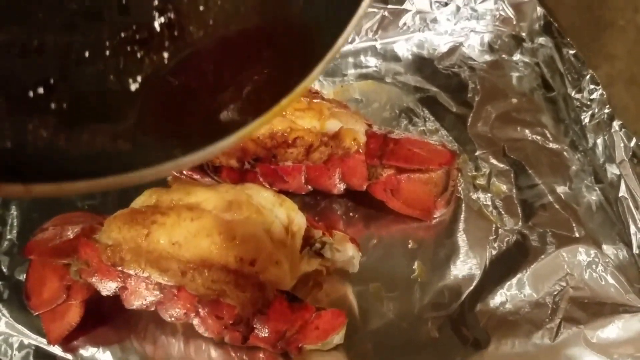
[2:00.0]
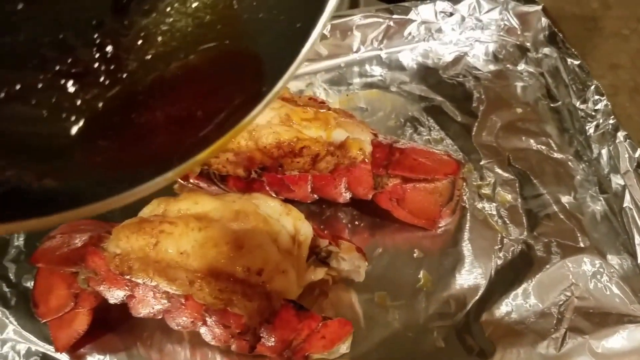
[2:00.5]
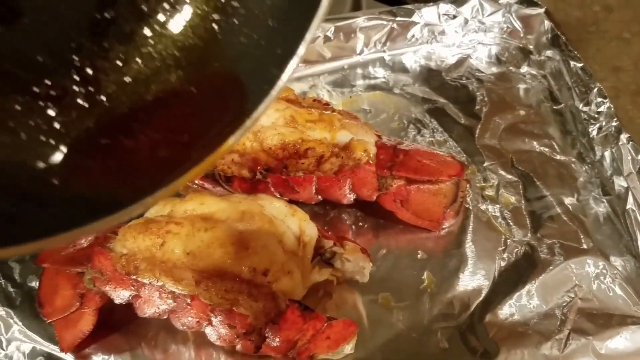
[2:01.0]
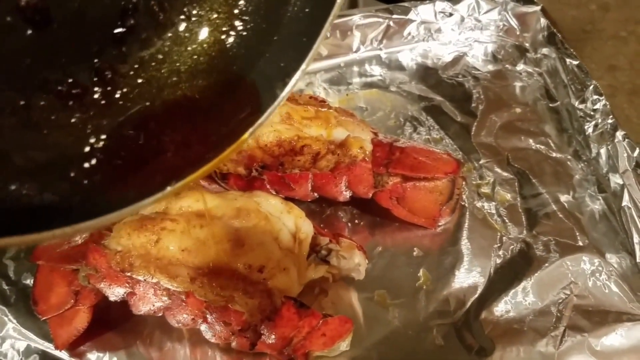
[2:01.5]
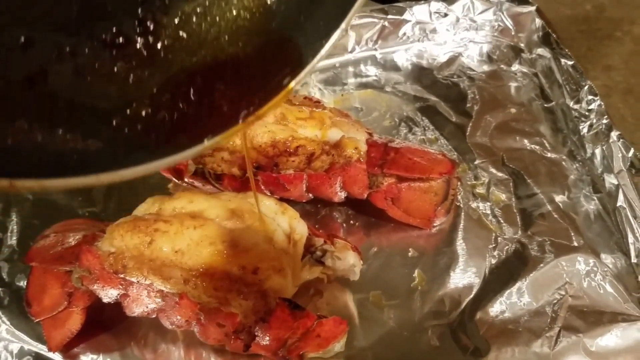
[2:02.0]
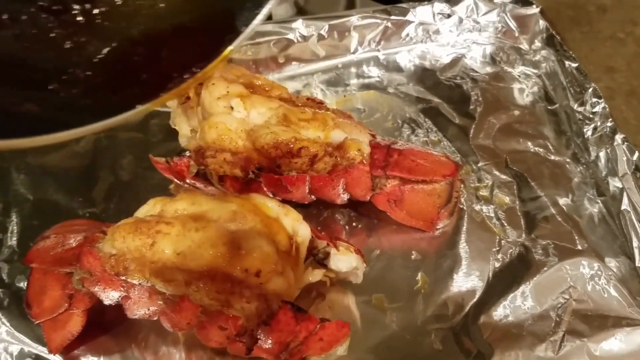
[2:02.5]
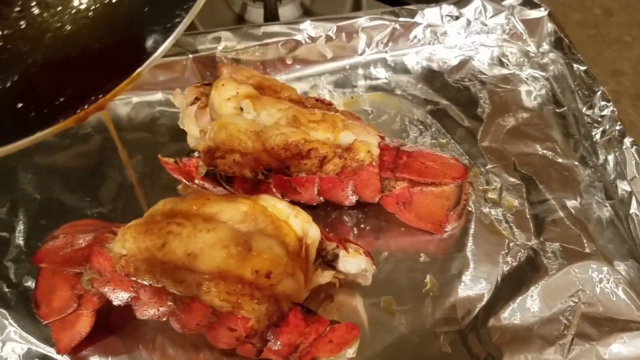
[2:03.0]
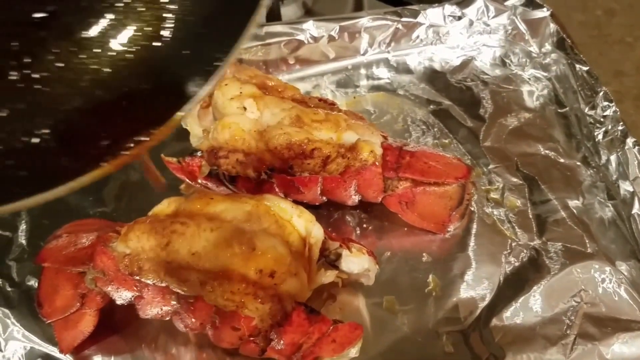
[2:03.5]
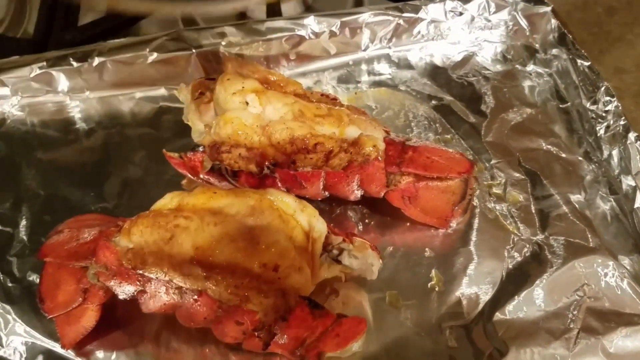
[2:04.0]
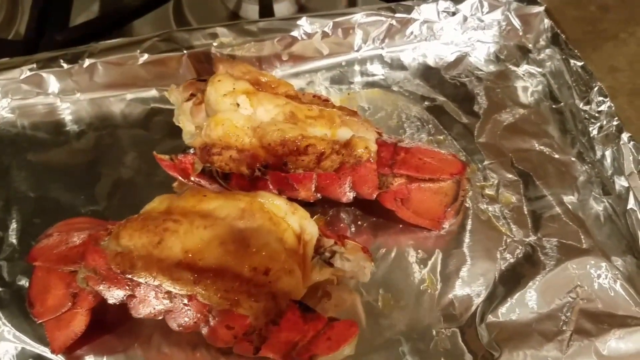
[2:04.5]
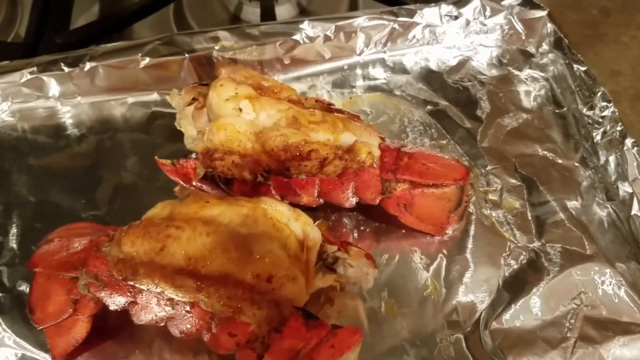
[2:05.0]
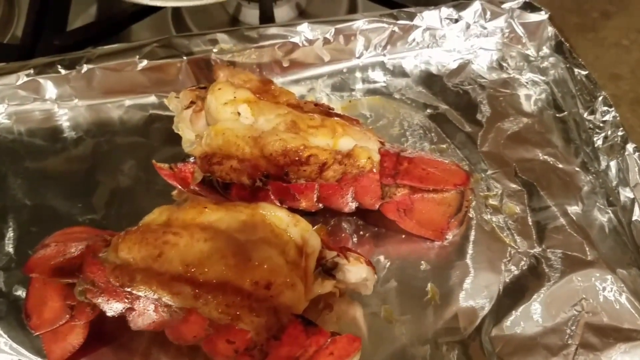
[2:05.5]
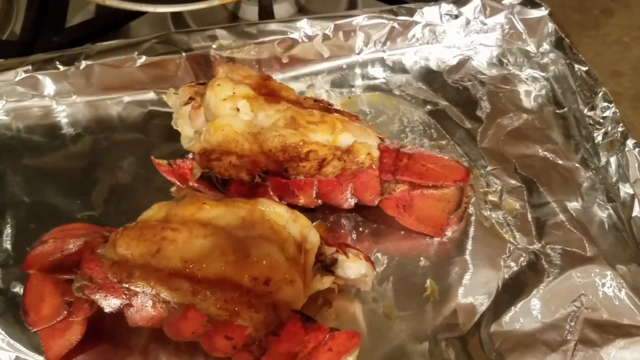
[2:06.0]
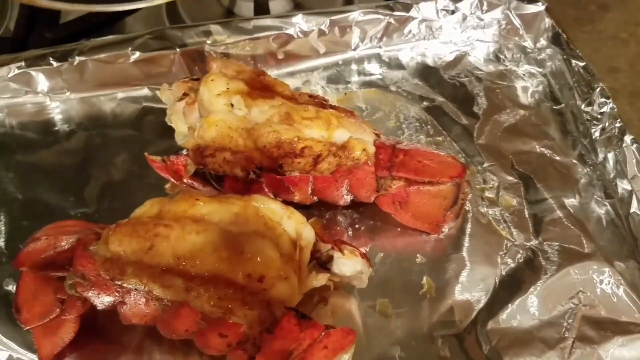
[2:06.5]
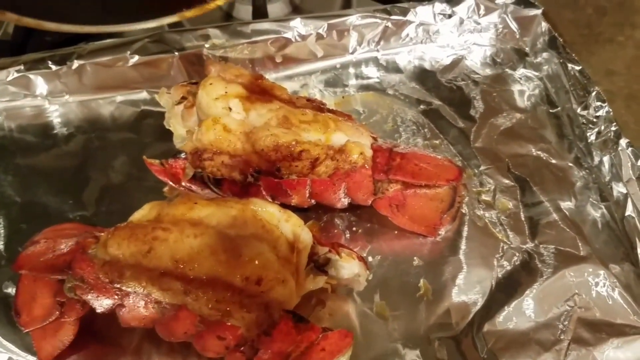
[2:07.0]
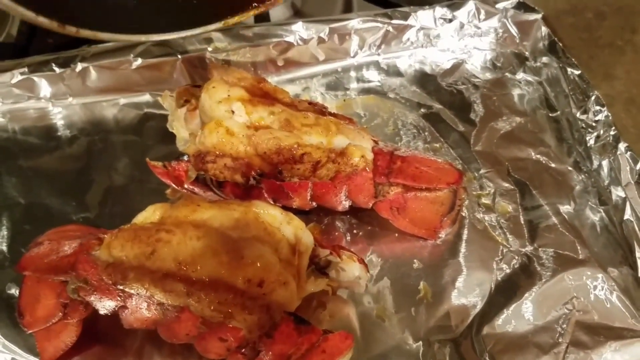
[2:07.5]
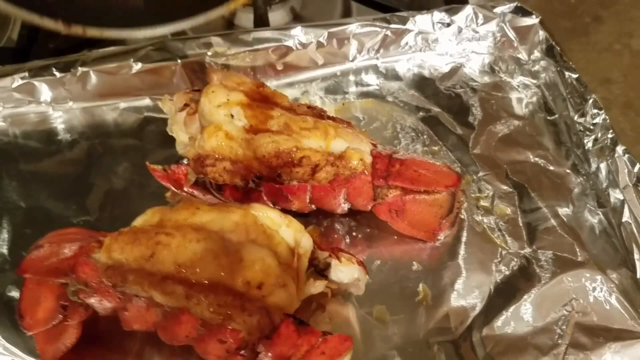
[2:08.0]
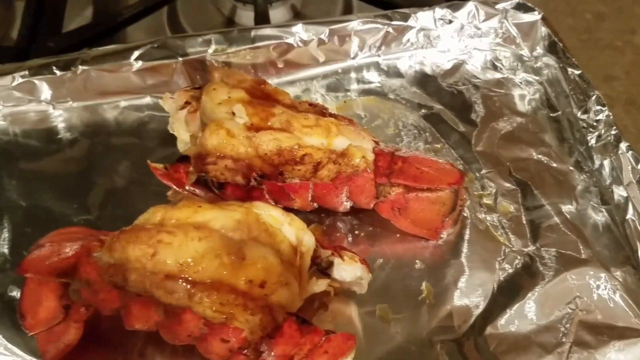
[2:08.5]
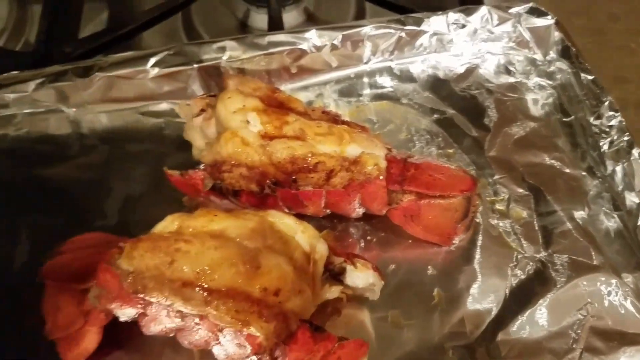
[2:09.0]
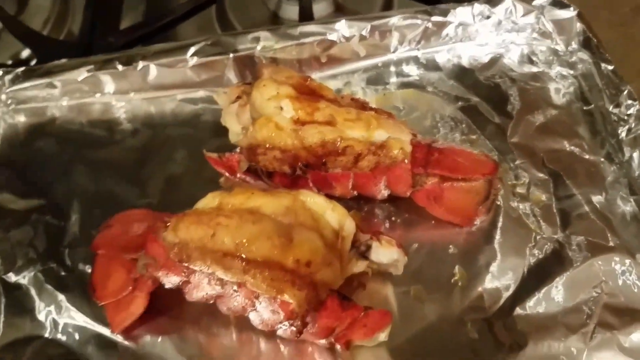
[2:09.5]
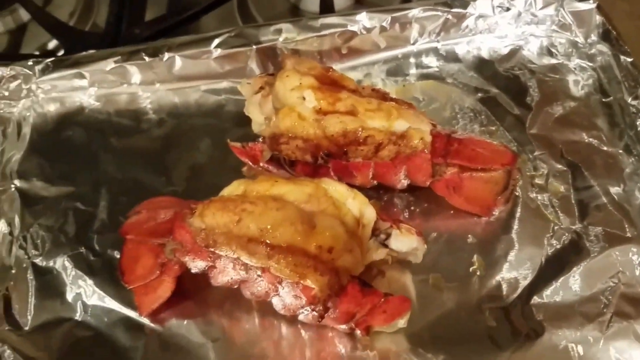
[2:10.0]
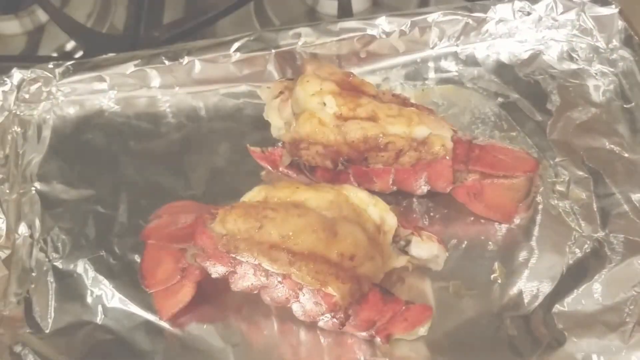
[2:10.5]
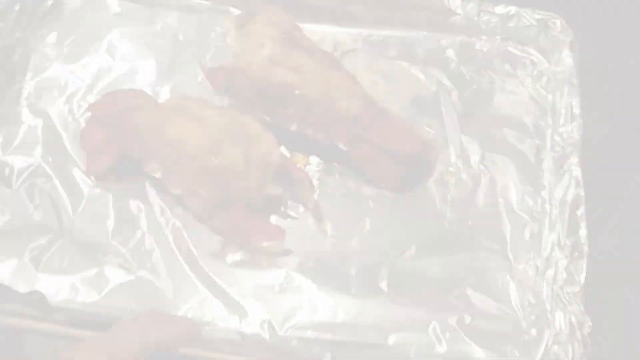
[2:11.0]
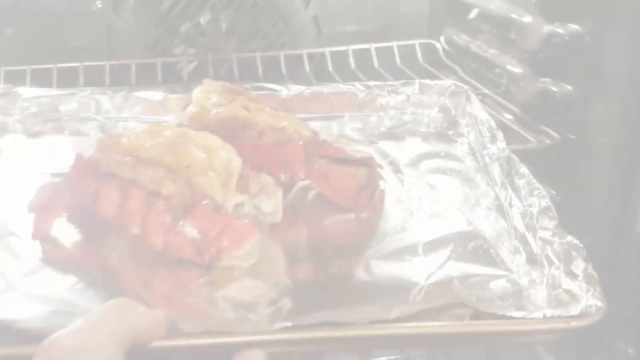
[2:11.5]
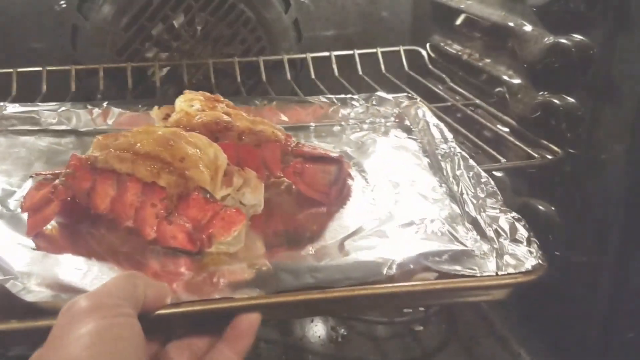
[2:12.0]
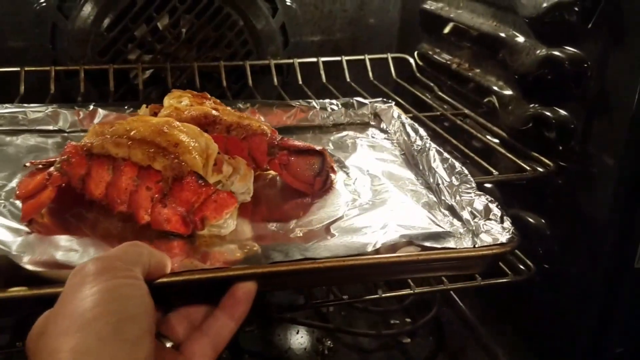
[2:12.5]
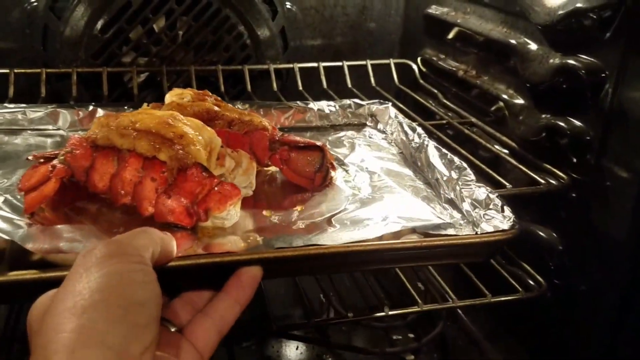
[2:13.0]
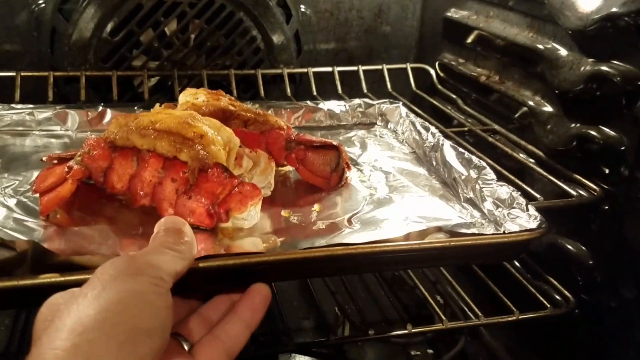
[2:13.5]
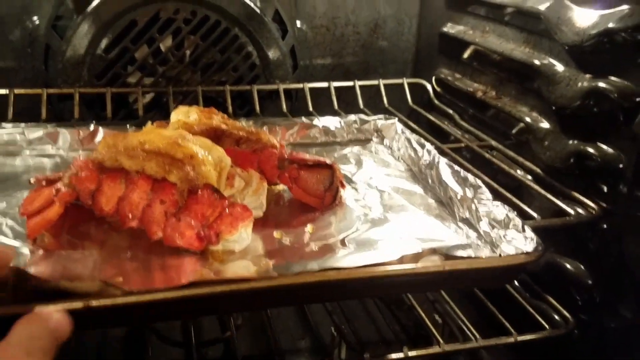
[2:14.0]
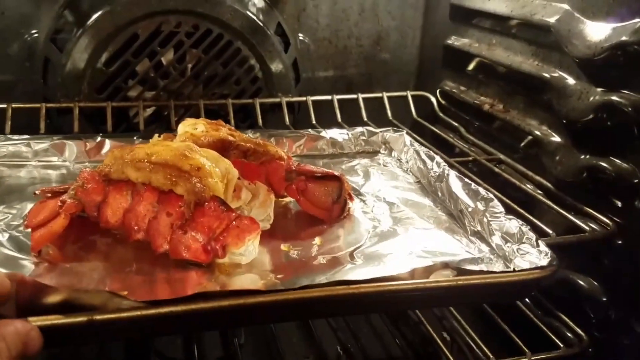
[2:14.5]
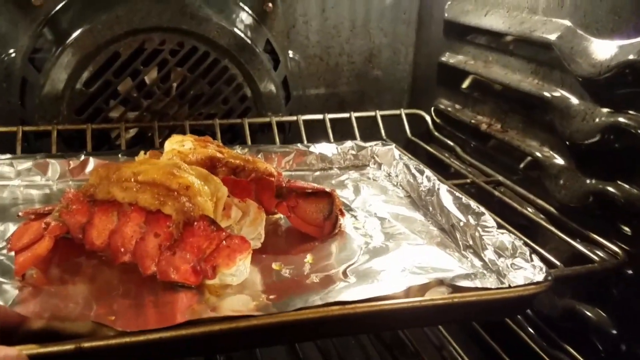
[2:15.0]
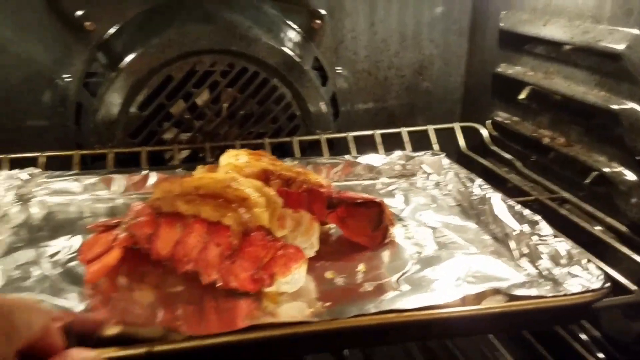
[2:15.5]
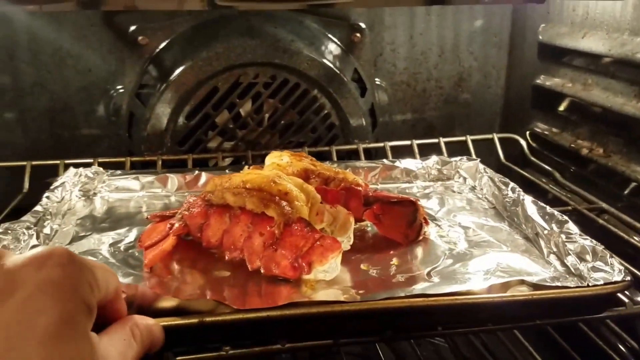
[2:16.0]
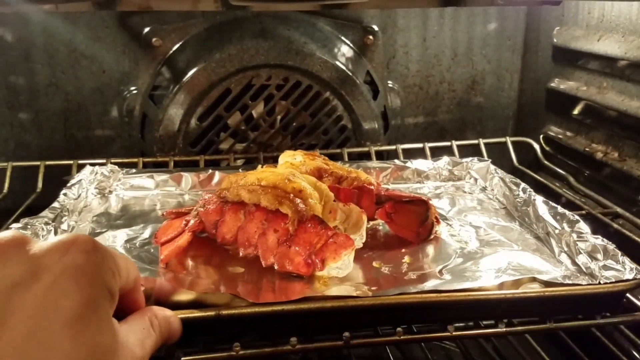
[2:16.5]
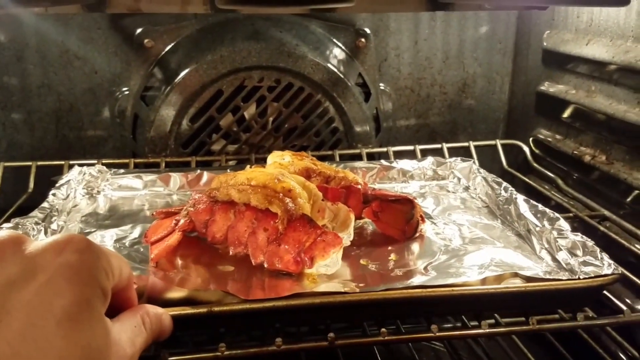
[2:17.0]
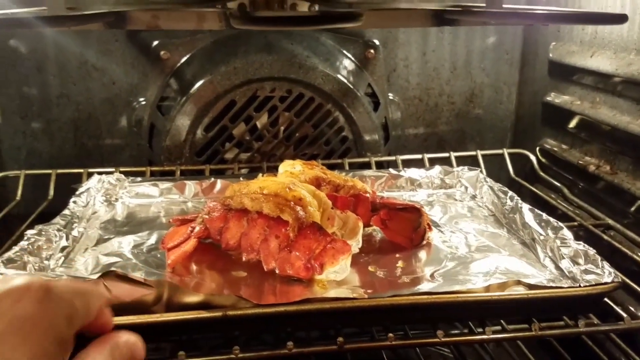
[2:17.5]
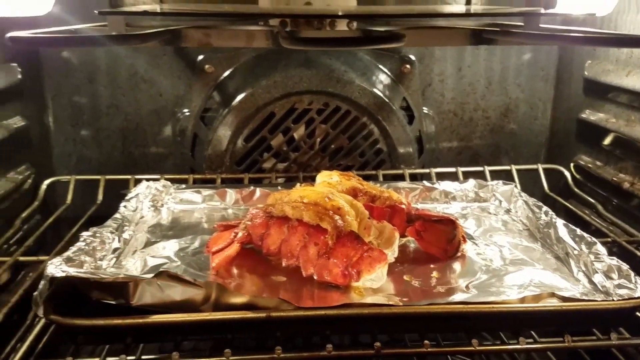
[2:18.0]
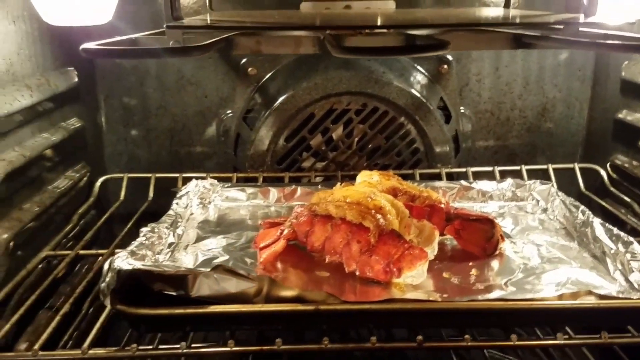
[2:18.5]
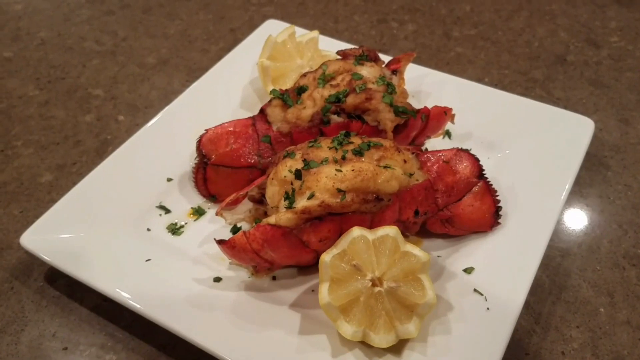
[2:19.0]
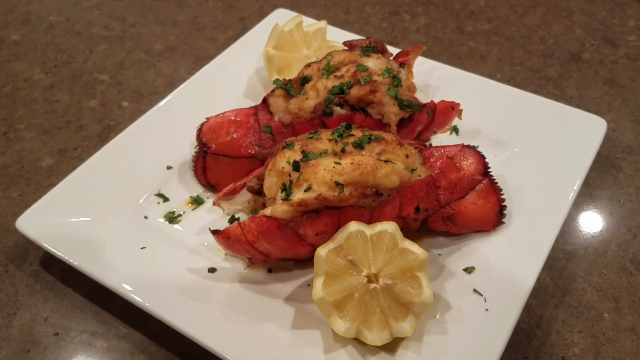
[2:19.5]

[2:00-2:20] From a high angle looking down, a silver foil is on a kitchen counter. On it are two lobster tails, now pink, placed skin side down. A pan with a dark buttery sauce comes in from the left-hand side and slowly drizzles the sauce over the two lobster tails. The scene changes to the inside of an open oven with silver trays. A hand pushes the two lobster tails, on the foil placed on a silver tray, into the oven, securing them. At the end, the lobsters are placed on a white square plate and moved onto a table, ready to be served.